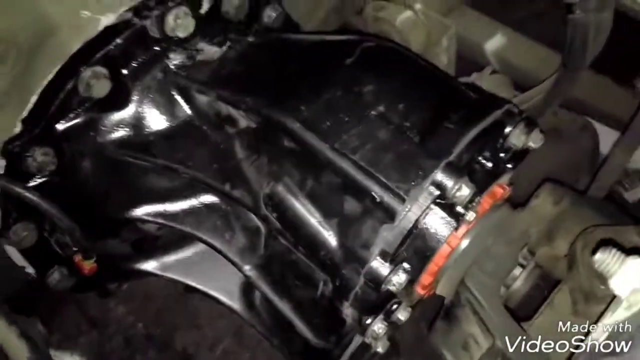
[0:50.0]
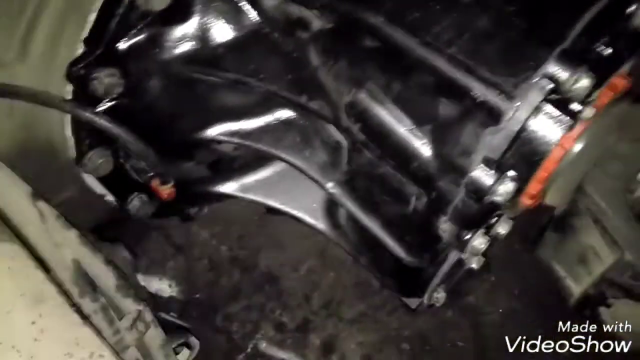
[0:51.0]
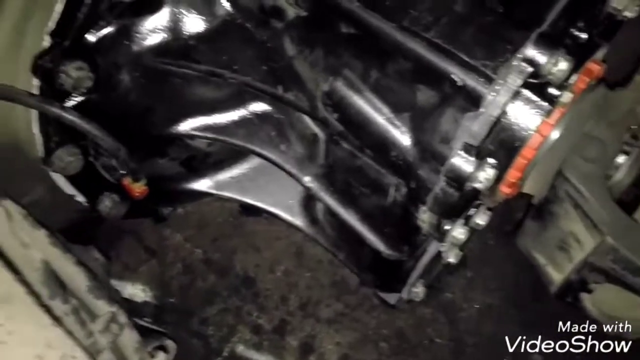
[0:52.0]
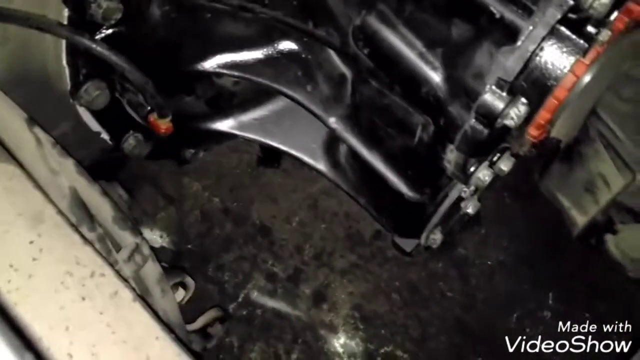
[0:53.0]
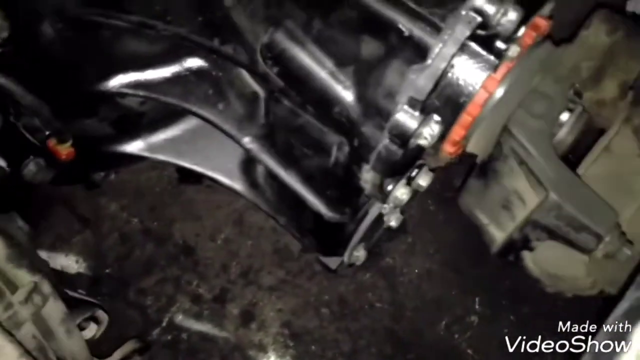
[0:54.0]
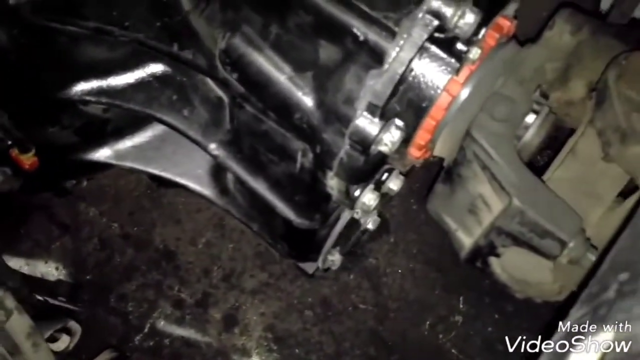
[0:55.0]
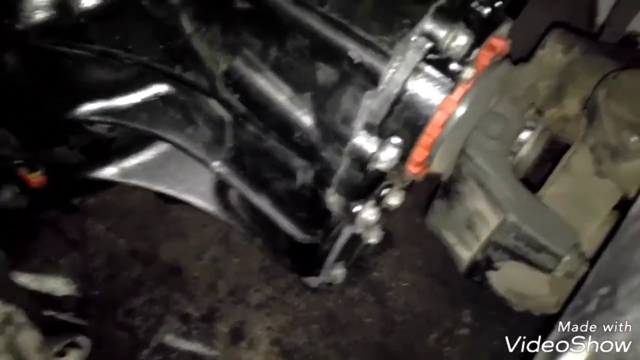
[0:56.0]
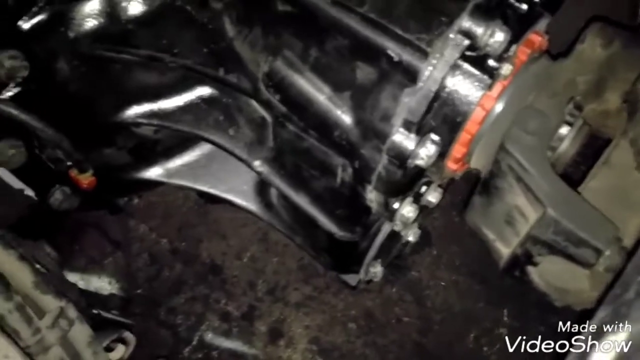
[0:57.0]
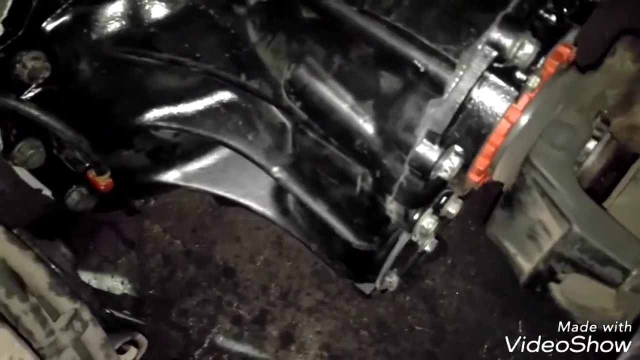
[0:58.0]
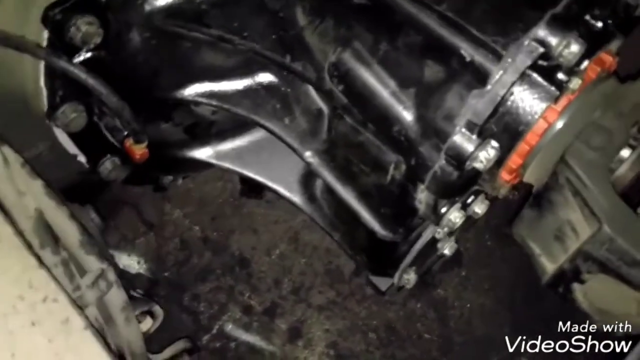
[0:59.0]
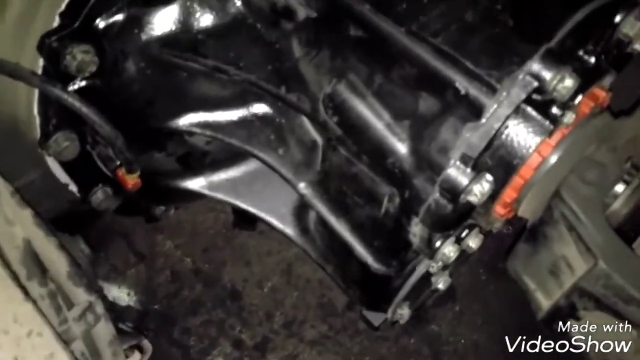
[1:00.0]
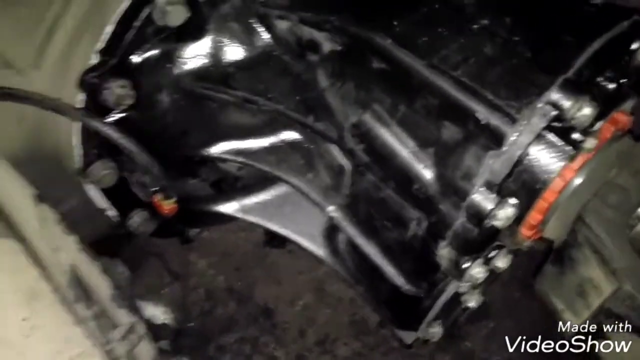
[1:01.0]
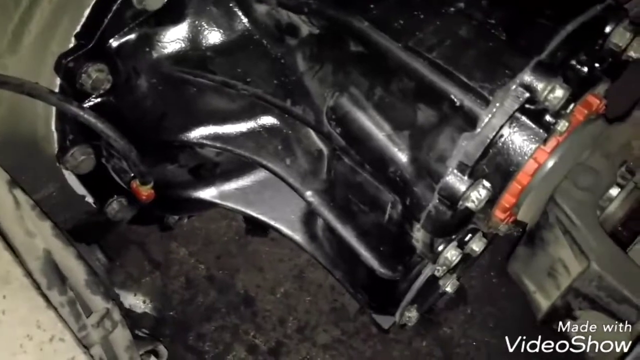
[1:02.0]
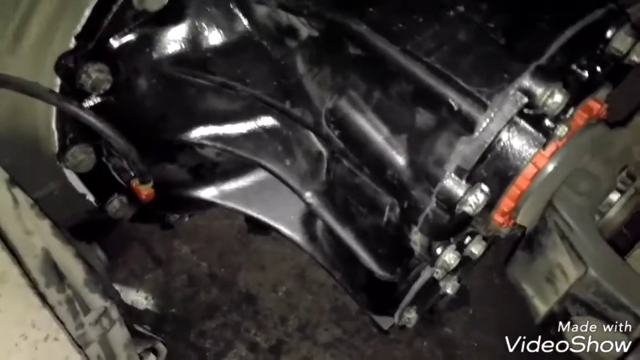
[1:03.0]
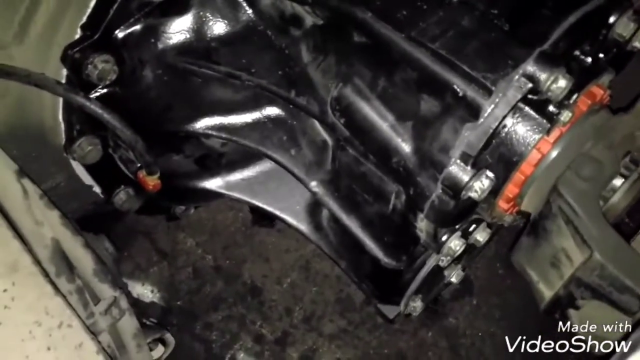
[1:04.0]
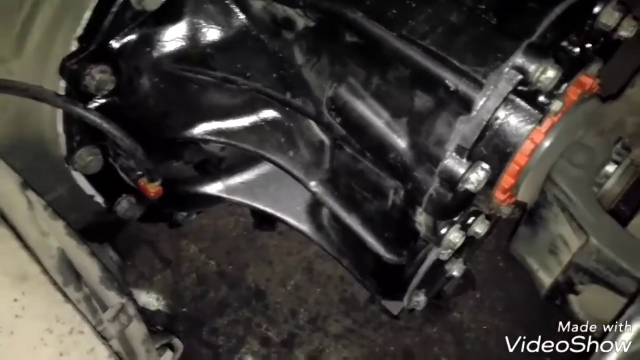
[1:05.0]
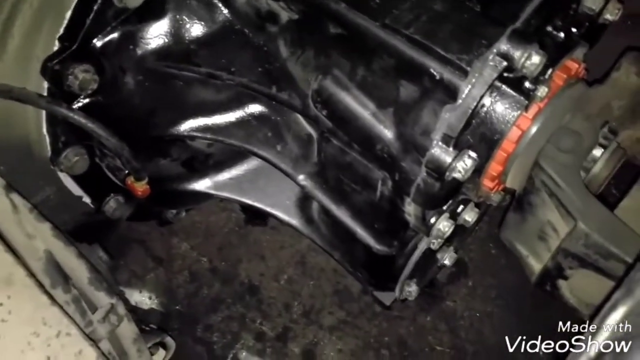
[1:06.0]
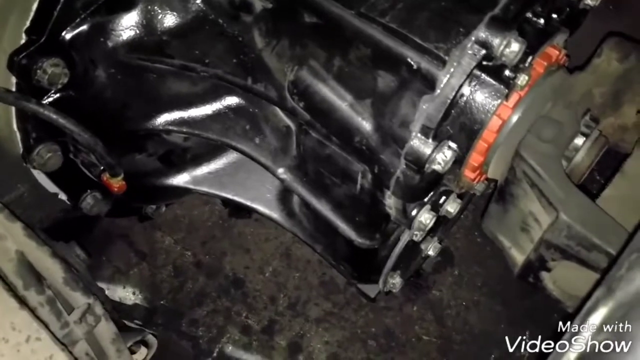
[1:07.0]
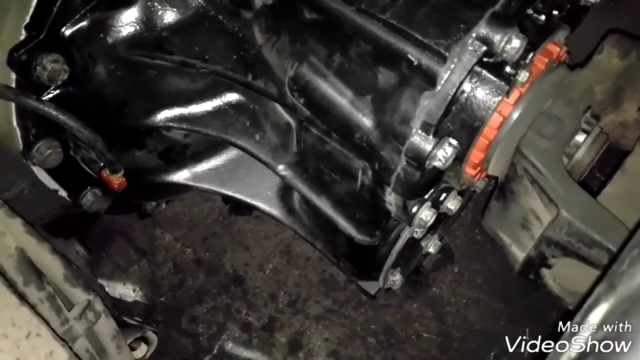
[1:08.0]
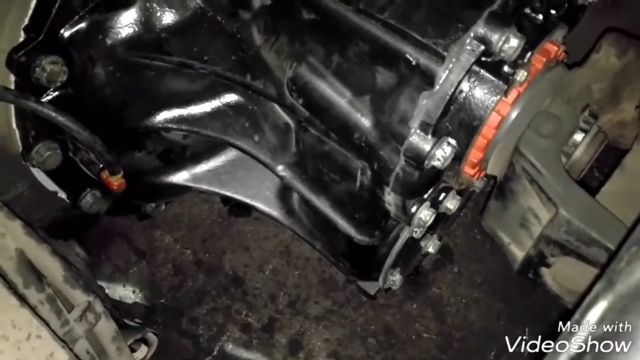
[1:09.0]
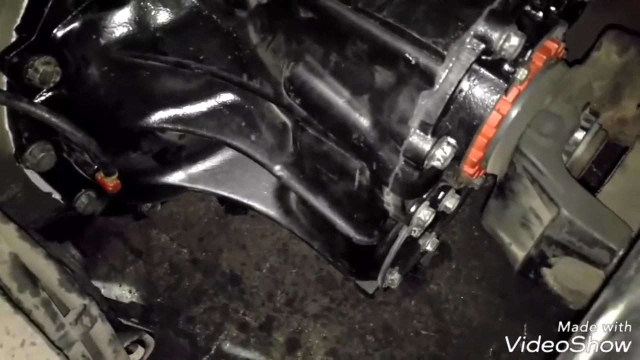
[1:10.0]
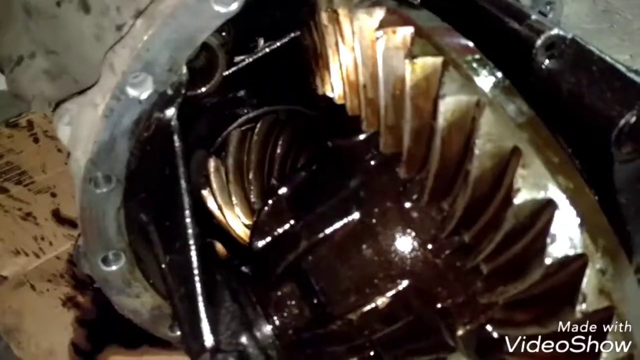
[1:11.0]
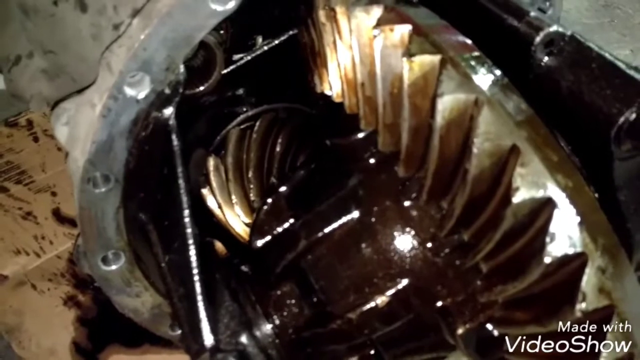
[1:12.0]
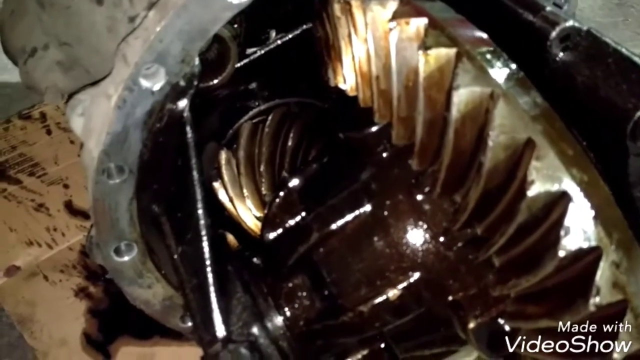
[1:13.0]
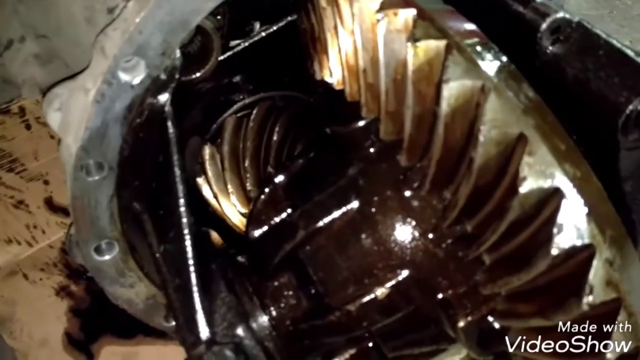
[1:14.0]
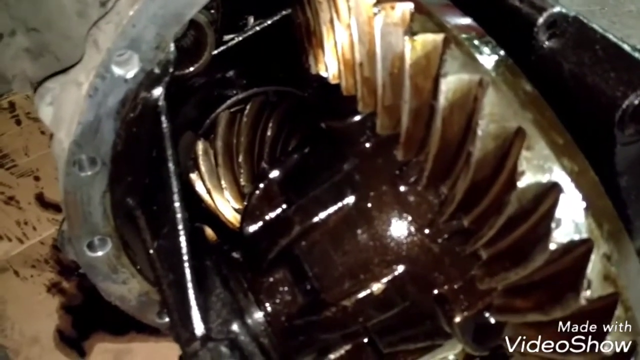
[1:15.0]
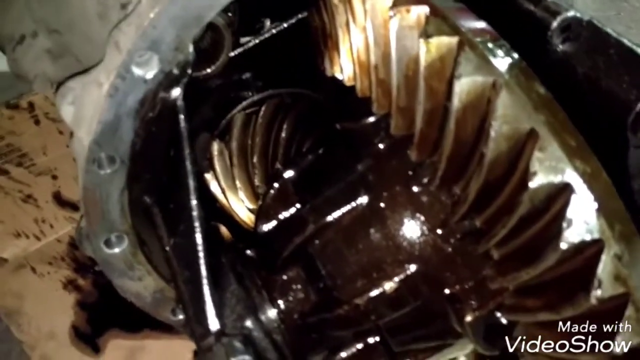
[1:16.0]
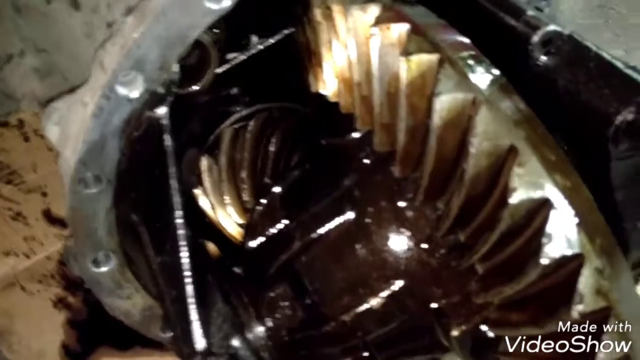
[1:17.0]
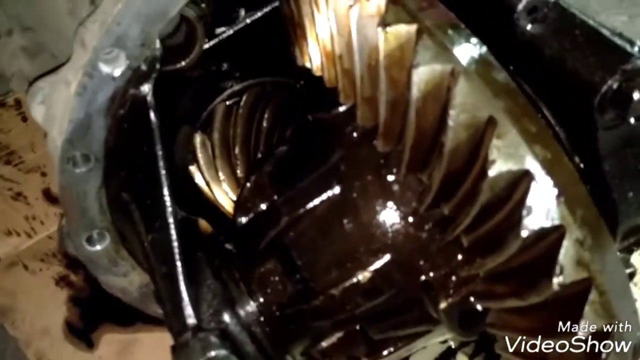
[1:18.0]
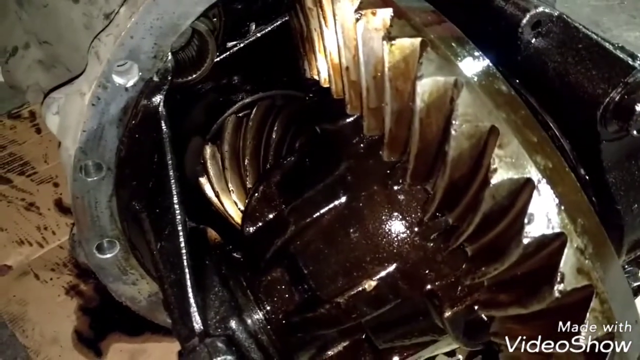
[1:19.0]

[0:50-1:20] The view shows the inside of what appears to be a vehicle of some sort. The main object is painted black and is shiny, while the rest of the area's insides are iron and appear a bit dirty. It is possibly a transmission or a torque converter. The words "Made with Video Show" are in the bottom right. The video pans close to the piece of machinery, showing its bolts and where it is connected between two sections. There is one black hose, and multiple bolts go around both the large end and the smaller back end. Then the inside is shown from when it was open: oily, with what appear to be toothed wheels with grooves that meet each other, connected to give spinning movement.